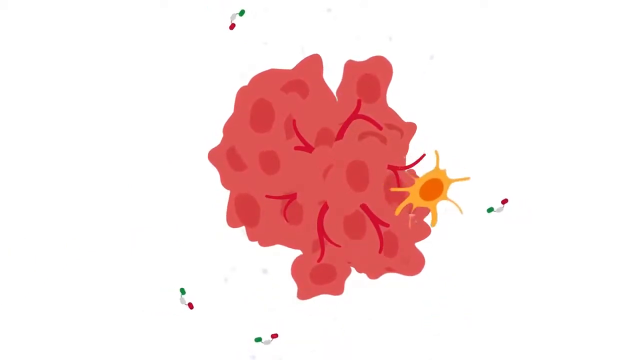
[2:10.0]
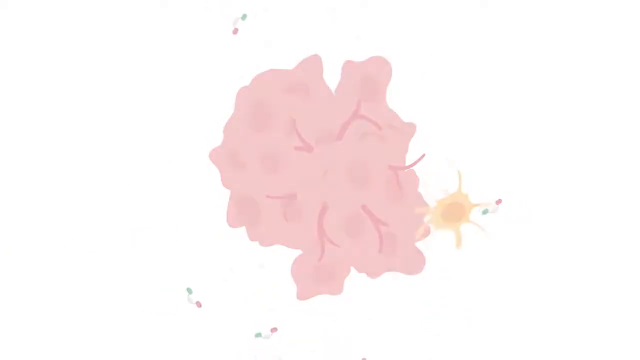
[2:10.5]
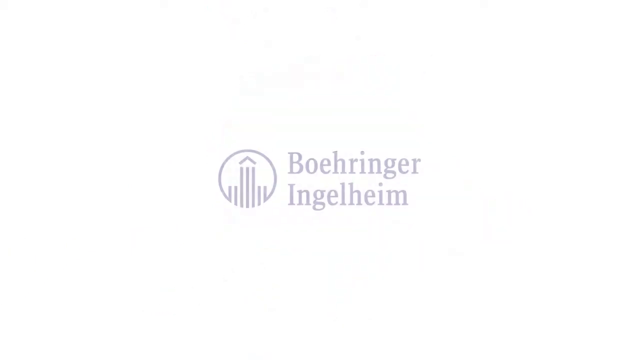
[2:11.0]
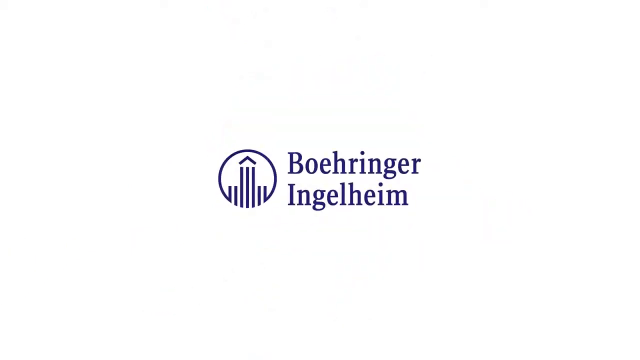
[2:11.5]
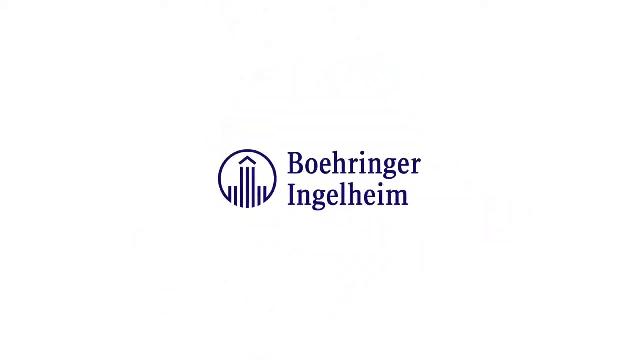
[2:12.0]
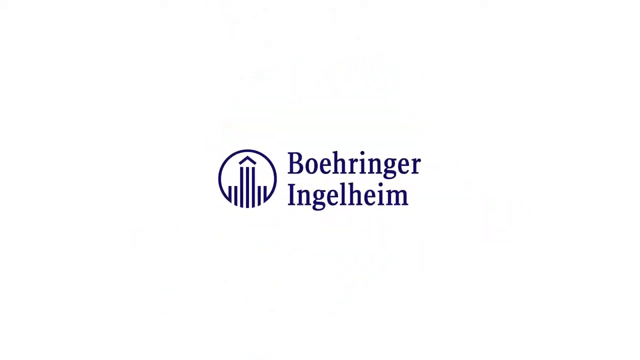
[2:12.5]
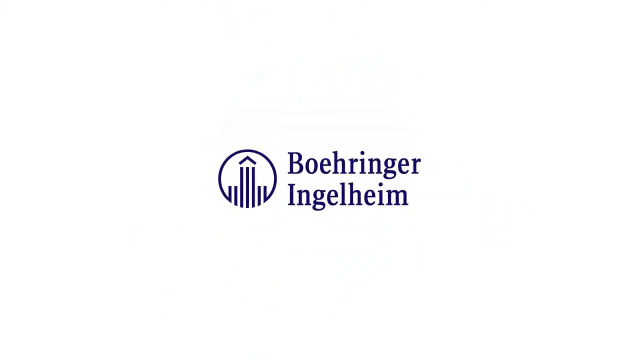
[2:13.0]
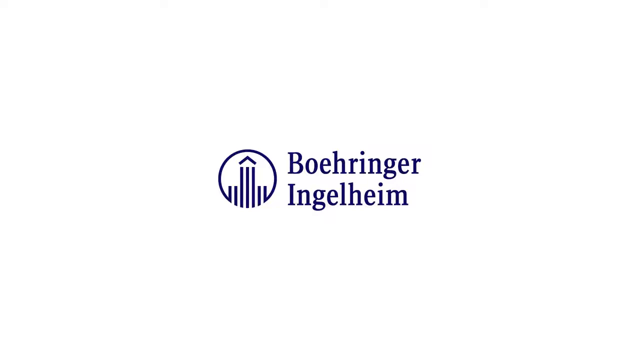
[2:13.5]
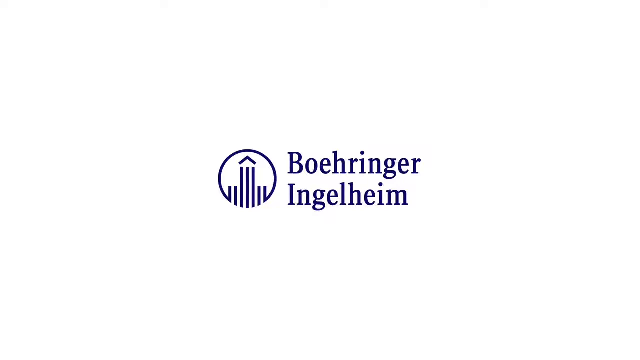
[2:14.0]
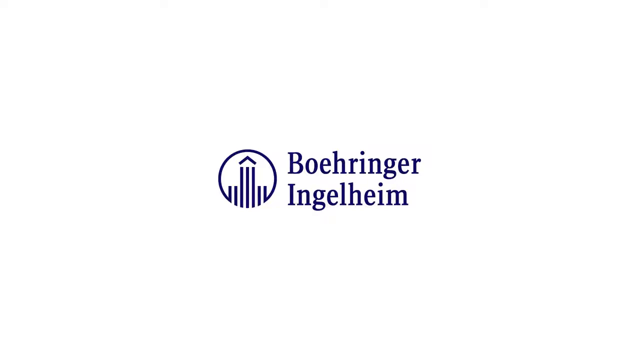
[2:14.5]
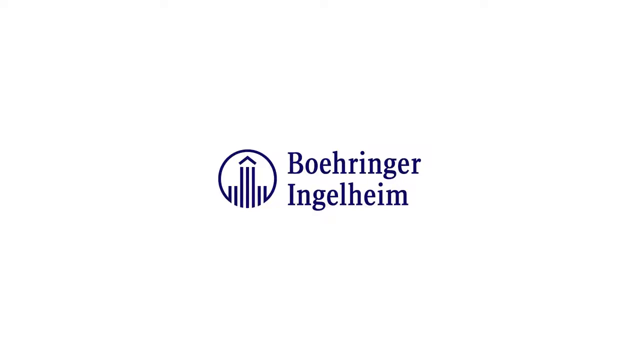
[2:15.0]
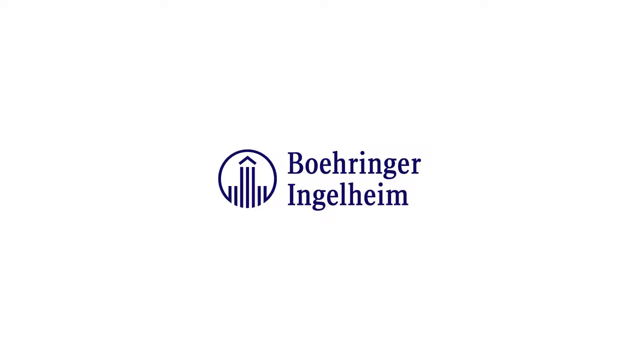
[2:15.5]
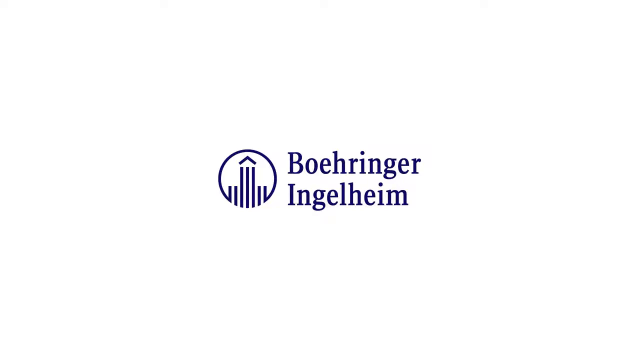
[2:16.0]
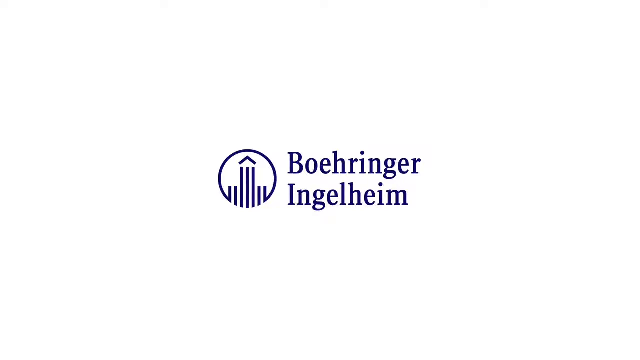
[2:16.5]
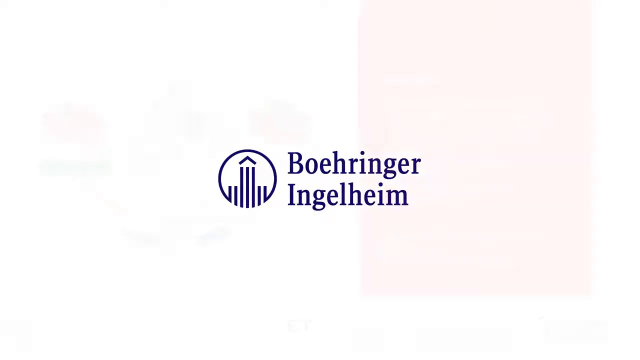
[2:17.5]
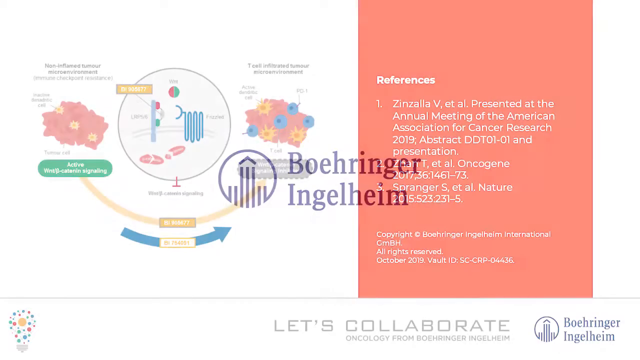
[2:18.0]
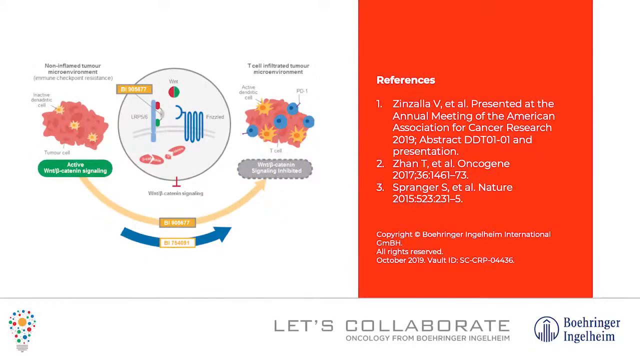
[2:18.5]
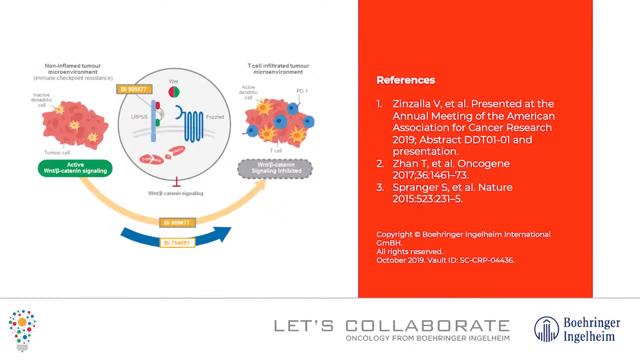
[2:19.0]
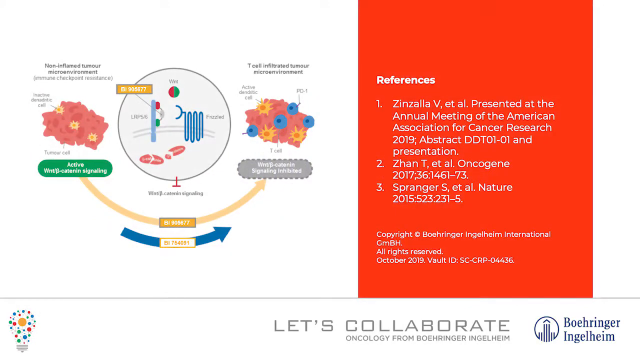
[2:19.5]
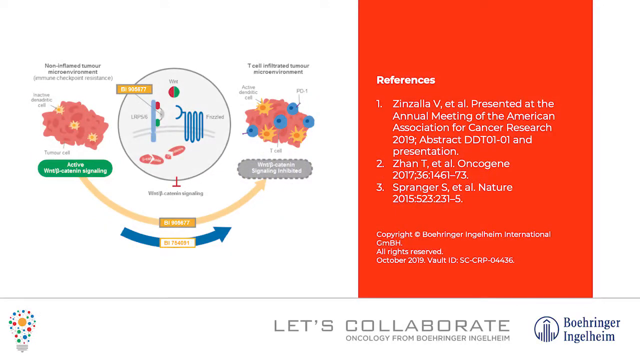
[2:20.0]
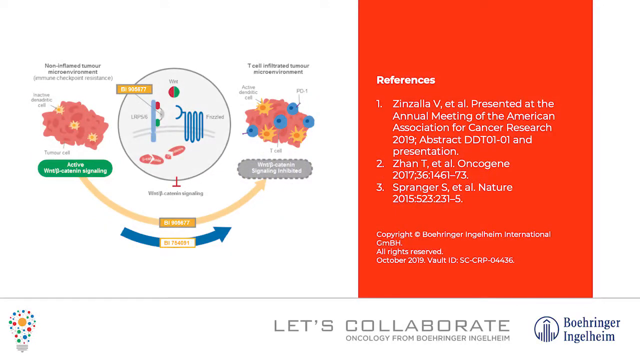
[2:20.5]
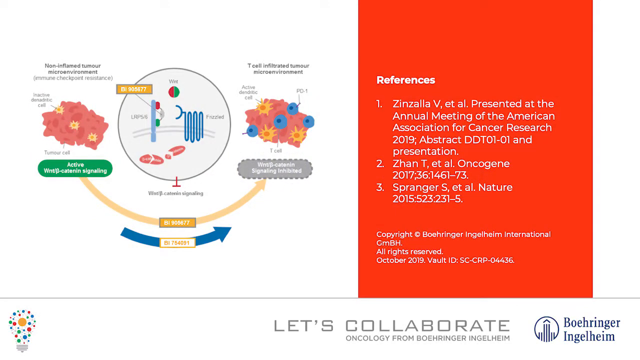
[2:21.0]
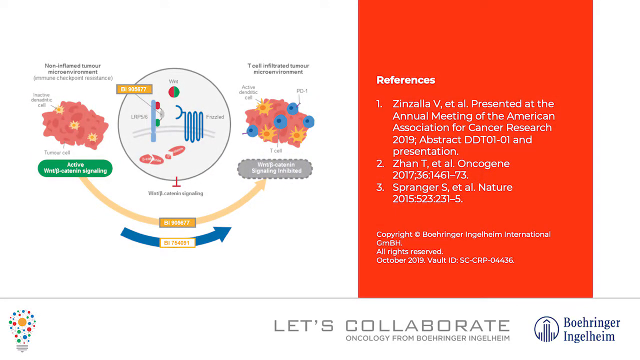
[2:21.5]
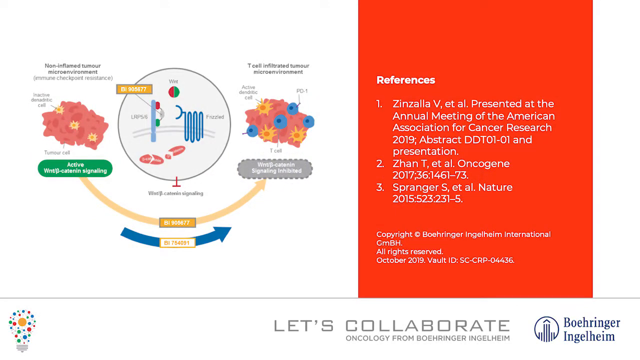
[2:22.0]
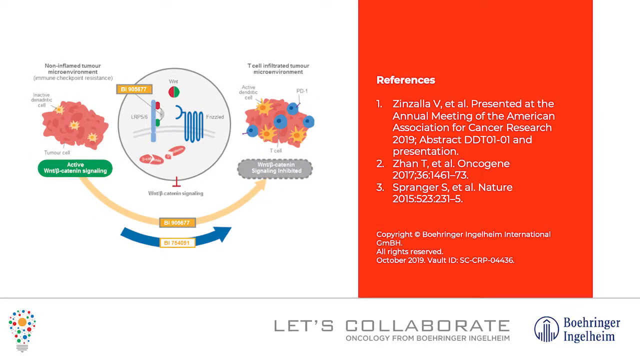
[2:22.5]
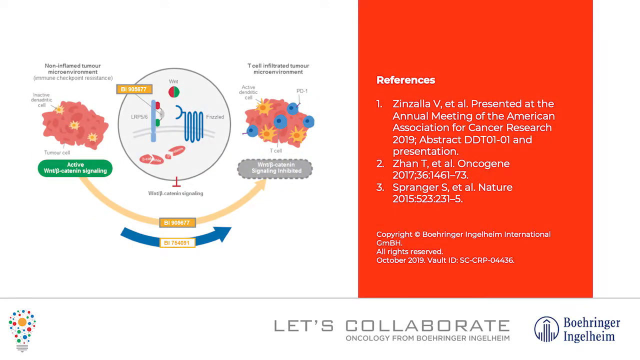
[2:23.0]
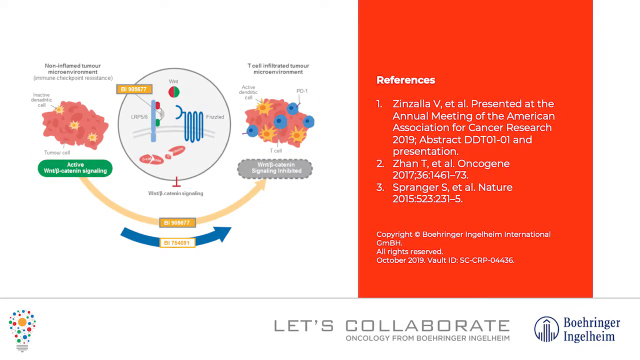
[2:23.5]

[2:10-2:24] The cell is in the center of the image, with a yellow cell with an orange body going away from it. The scene then fades and dissolves to a white background, and a logo pops up with the text "Boehringer Ingelheim" and, on the left side, a logo with the same triangular-looking object that was in the T cell animation. The text looks to be blue or bluish-purple, with capital B and I and everything else lowercase. The text and logo are both in the center of the image and look to be just sitting there as a screenshot. The image then goes back to what the beginning of the video showed, with a red rectangular vertical box with white lettering on the right and the model on the left, including the various proteins and the diagram of how the medicine works. The white text on the red box reads "references" and then shows three different references in lighter white text.